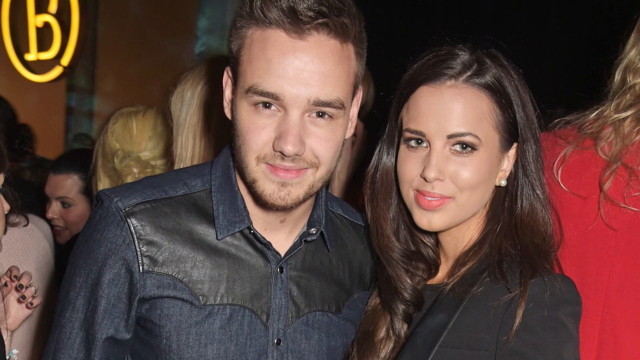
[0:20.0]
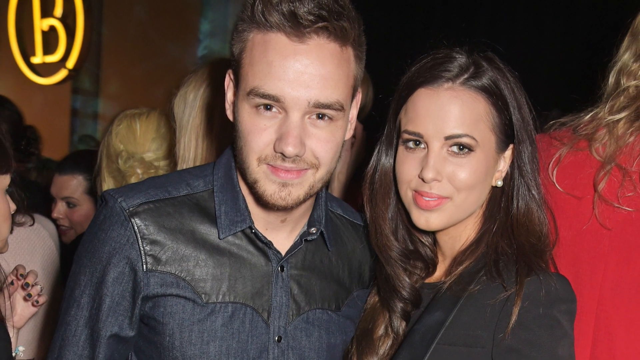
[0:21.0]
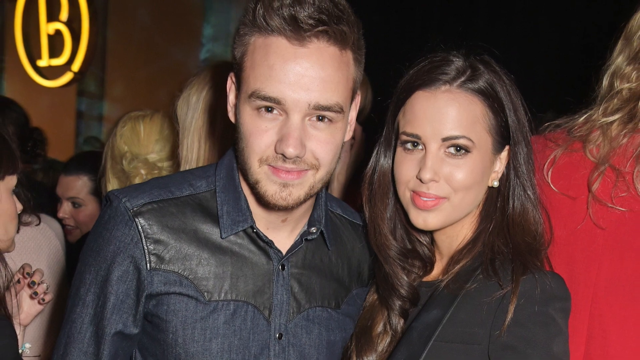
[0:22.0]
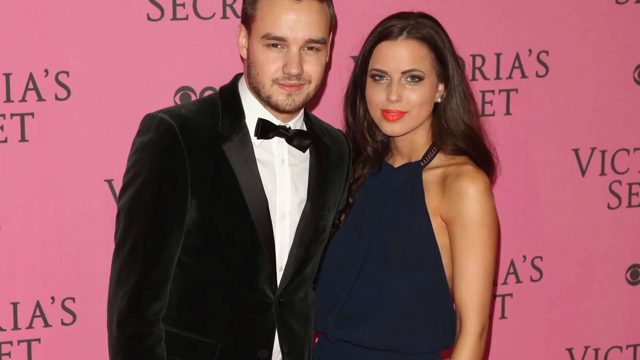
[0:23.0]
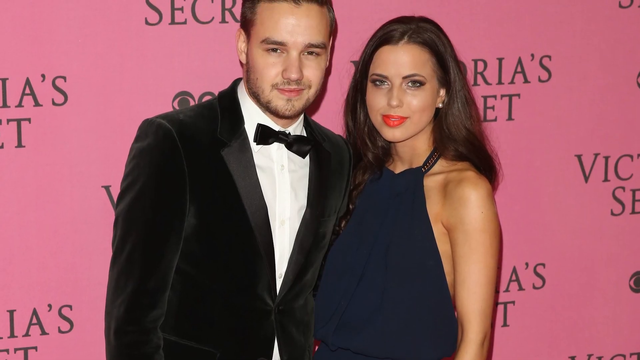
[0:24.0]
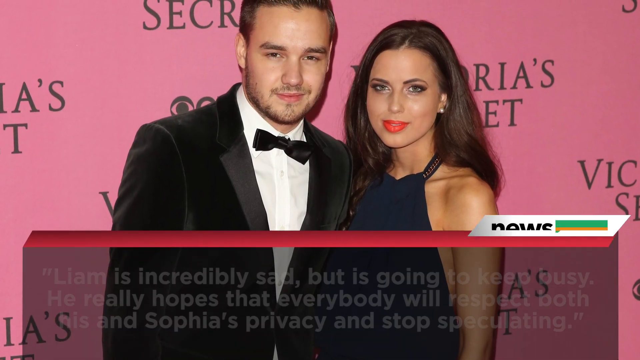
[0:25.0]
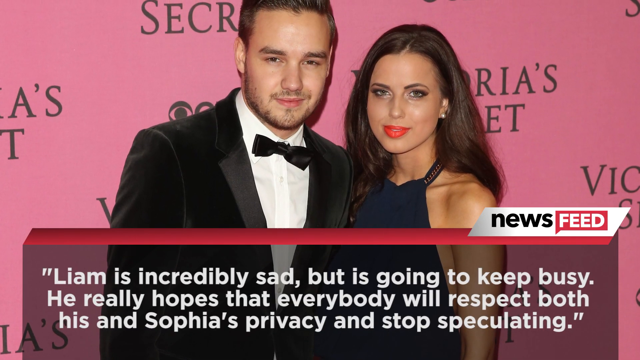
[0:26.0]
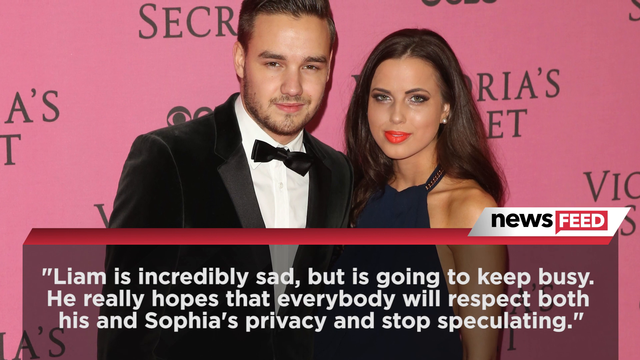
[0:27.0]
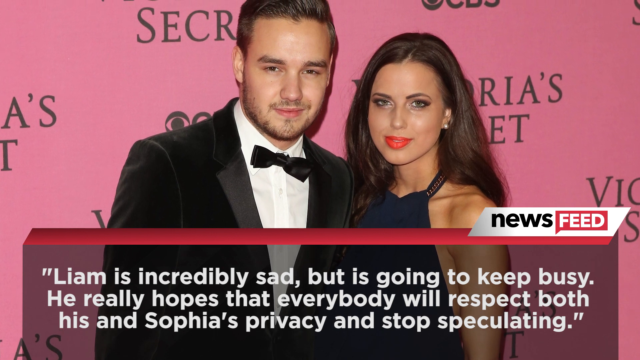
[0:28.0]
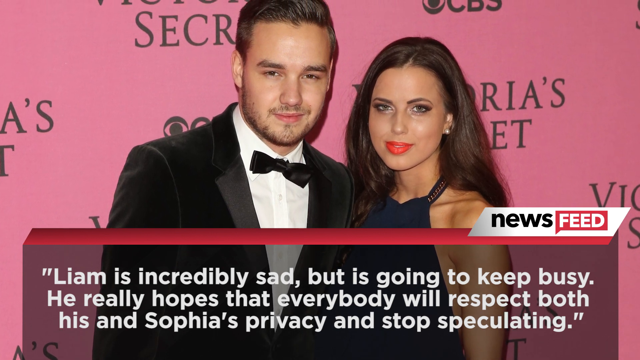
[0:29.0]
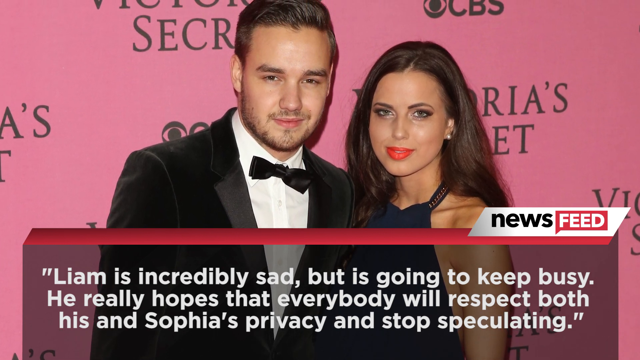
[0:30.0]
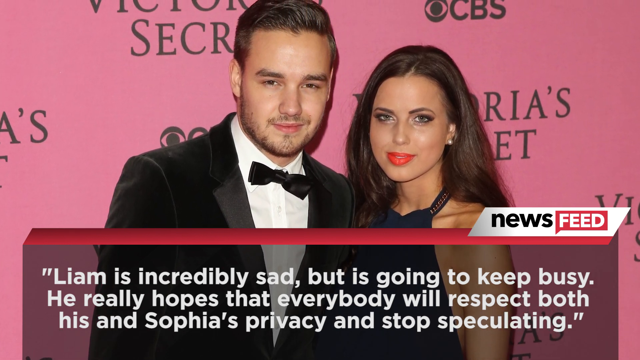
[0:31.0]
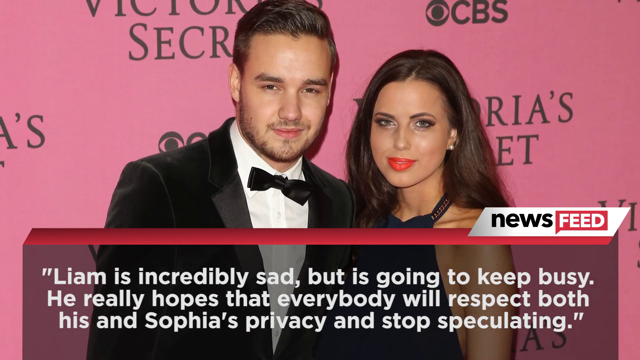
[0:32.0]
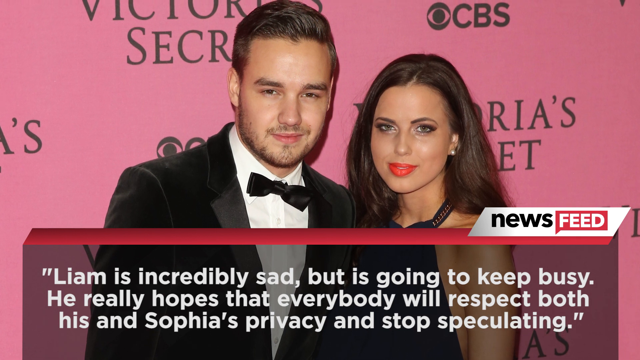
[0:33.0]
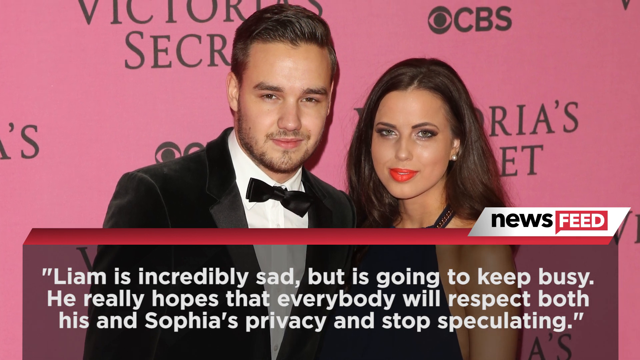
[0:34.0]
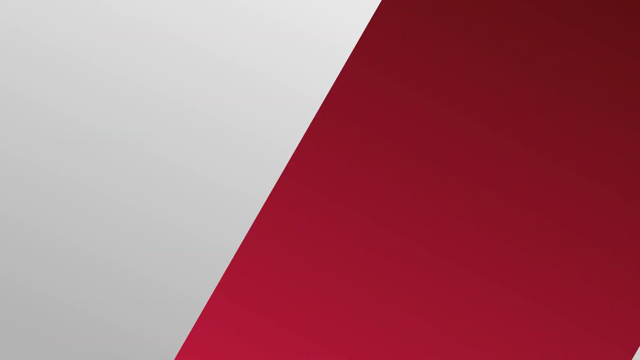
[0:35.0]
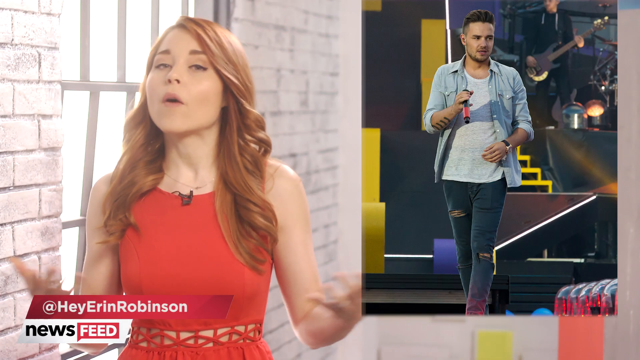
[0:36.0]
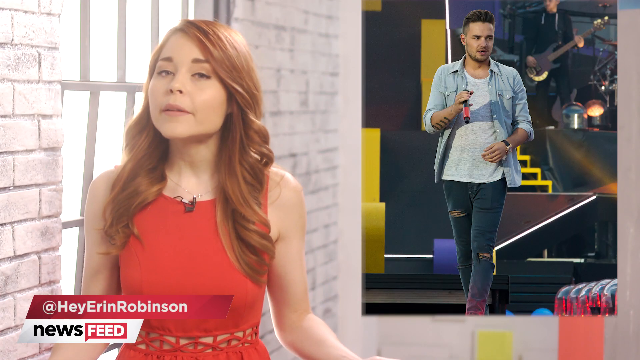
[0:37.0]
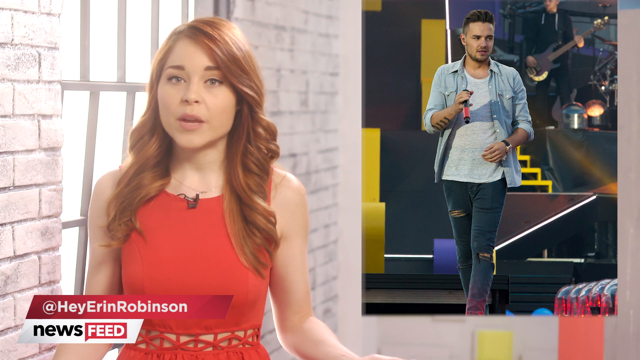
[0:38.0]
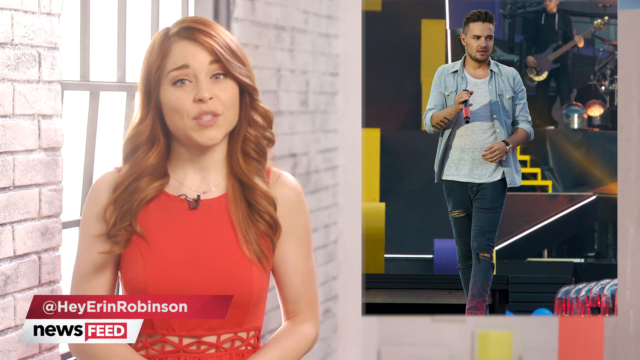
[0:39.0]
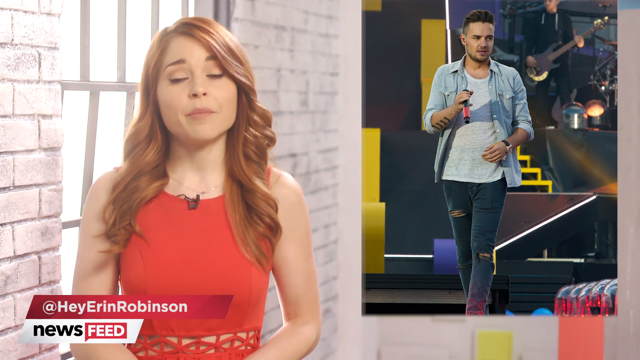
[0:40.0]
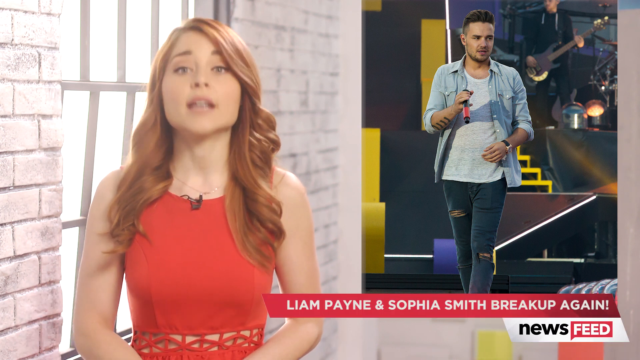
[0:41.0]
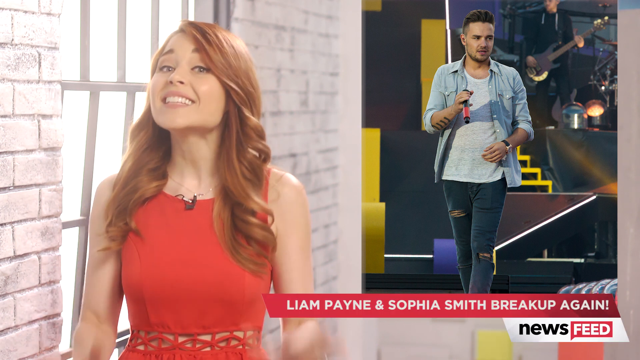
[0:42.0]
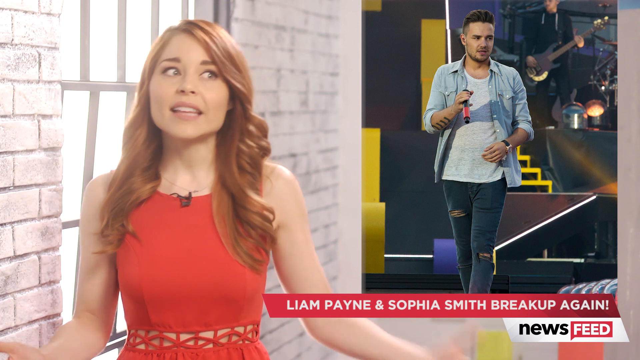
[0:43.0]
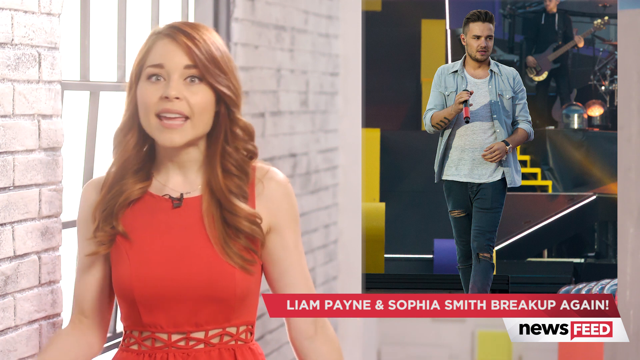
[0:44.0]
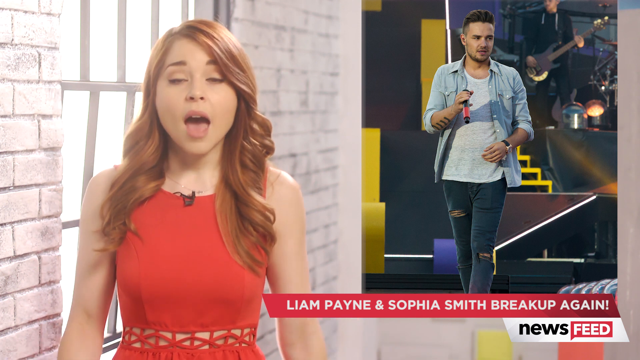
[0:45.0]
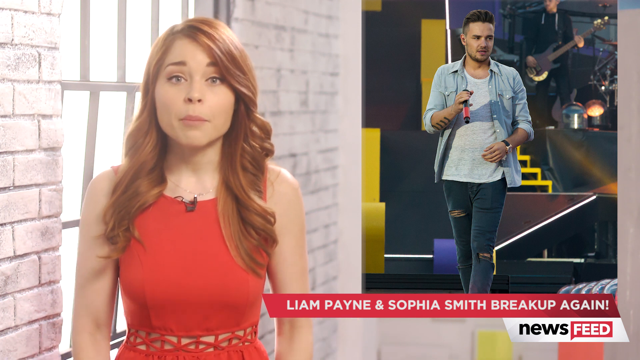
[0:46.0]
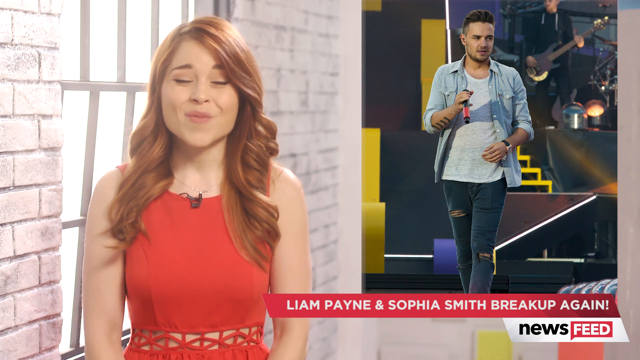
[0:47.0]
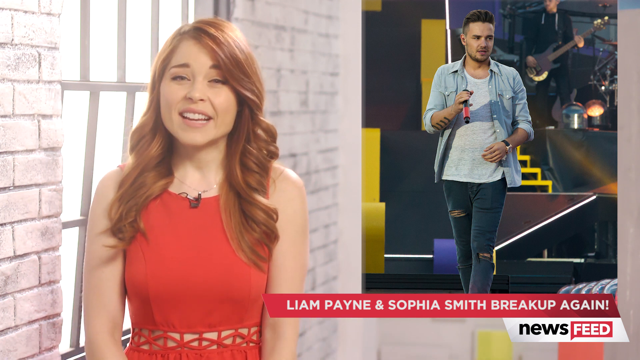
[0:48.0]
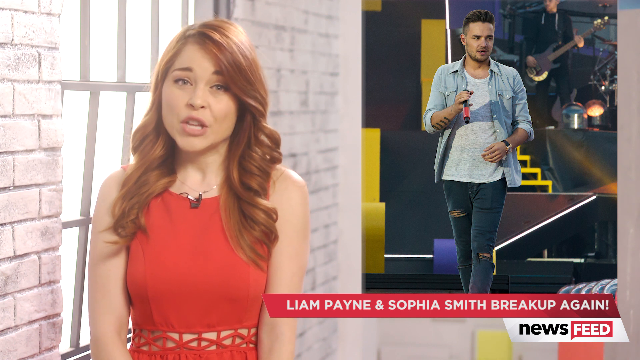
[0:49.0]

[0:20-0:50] Two individuals are shown, with others at the back who are not facing the camera. One is a man wearing jeans and a black leather t-shirt, with brown hair; next to him is a lady in a black suit with black hair. The background shows that they are at an event or party. The video changes to the same two people in a different background: the man now wears a fluffy black suit with a white shirt and a black tie, and the lady next to him wears a navy dress and earrings and has long hair. Behind them is a paper pasted on a pink wall. Text displayed with the picture reads "Lilliam is incredible sad but is going to keep busy he really hopes that everyone will respect both his and Sophia's privacy and stop speculating". The video then changes to the News Feed reporter shown earlier, who is talking.